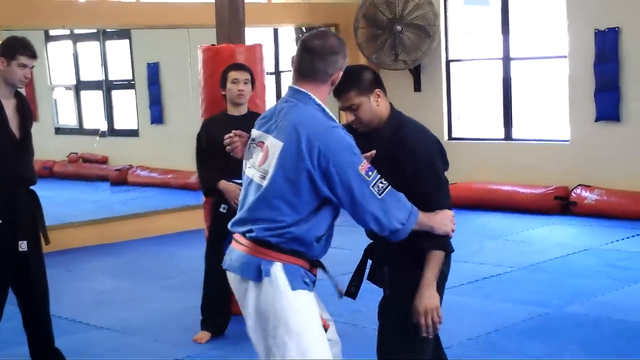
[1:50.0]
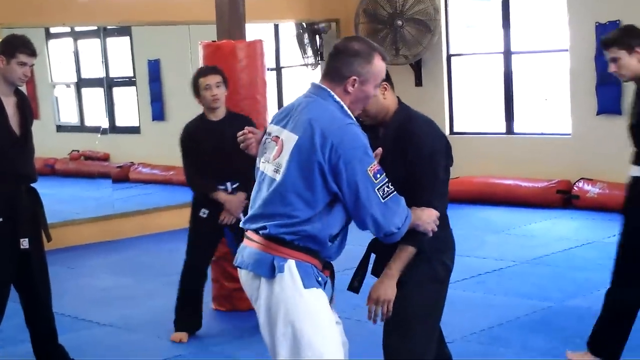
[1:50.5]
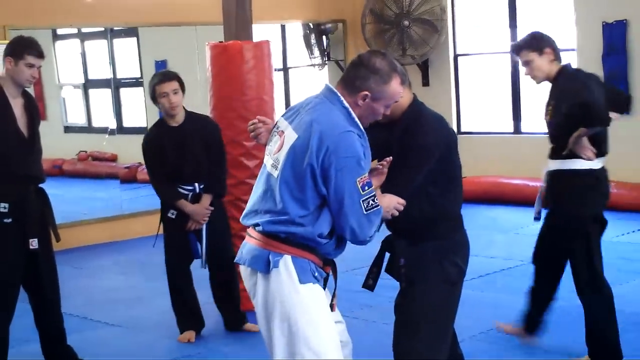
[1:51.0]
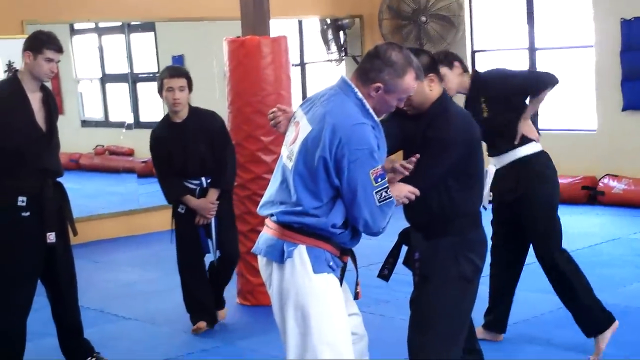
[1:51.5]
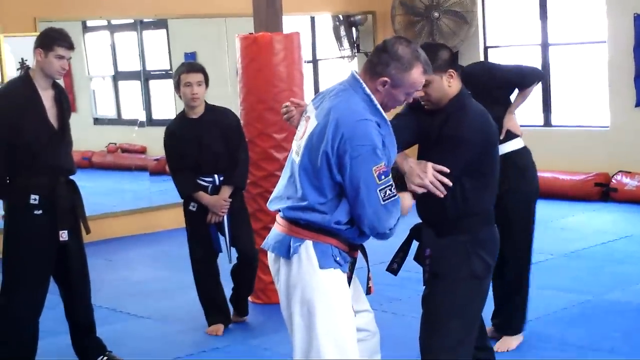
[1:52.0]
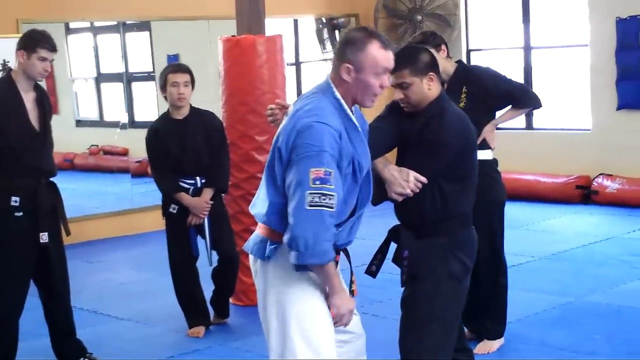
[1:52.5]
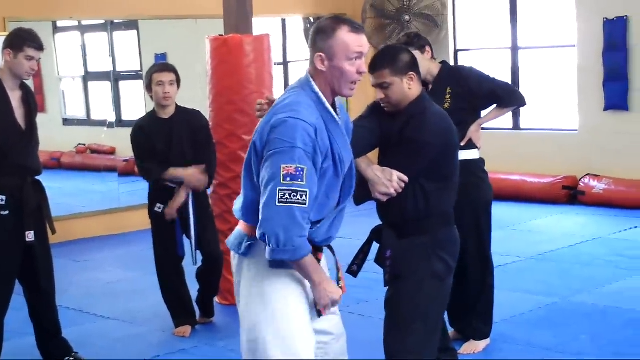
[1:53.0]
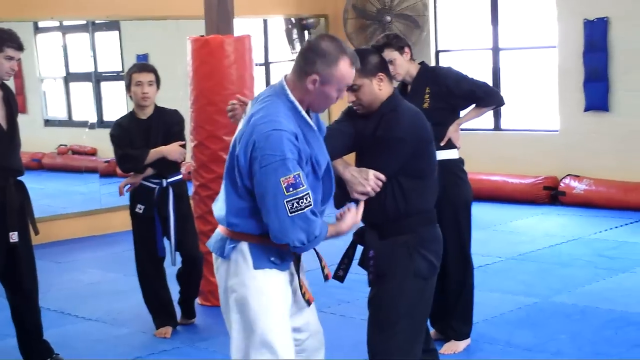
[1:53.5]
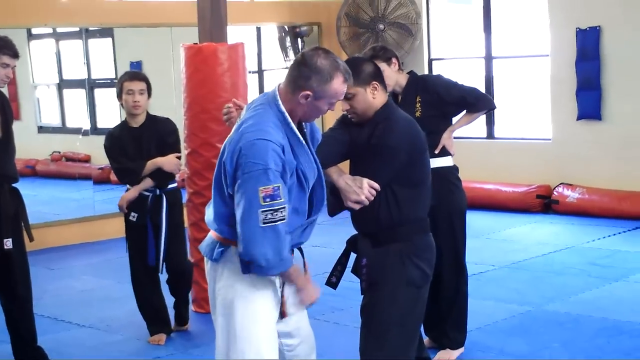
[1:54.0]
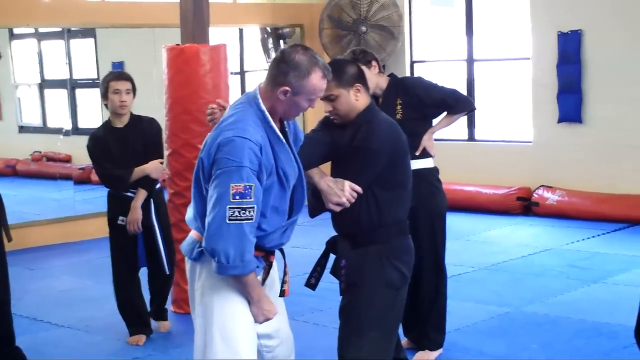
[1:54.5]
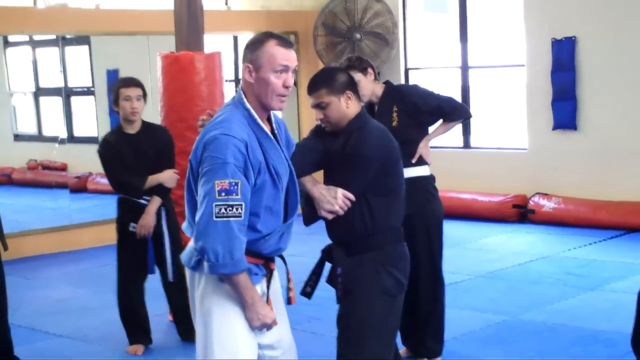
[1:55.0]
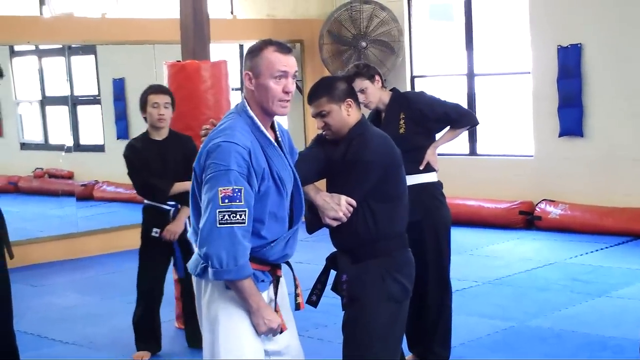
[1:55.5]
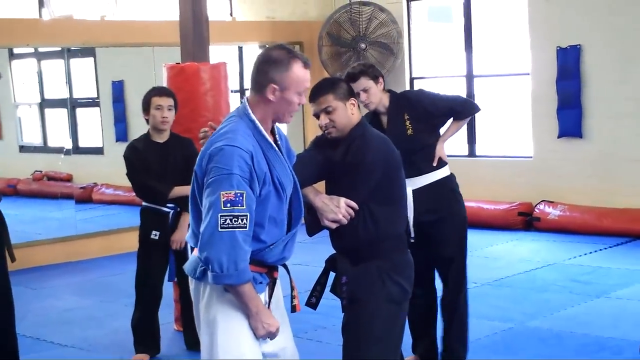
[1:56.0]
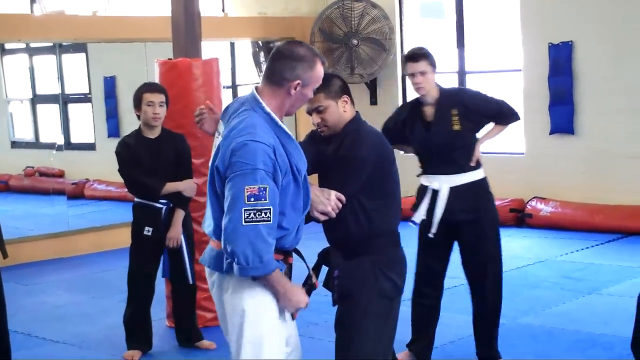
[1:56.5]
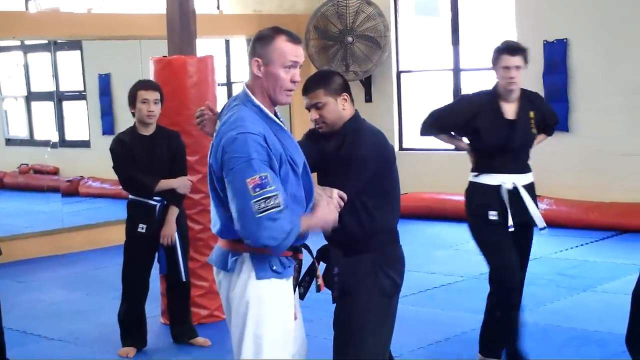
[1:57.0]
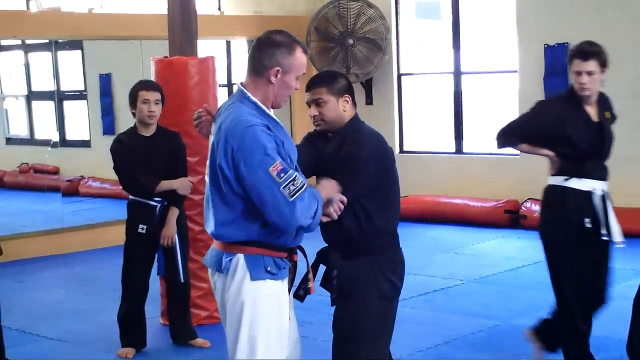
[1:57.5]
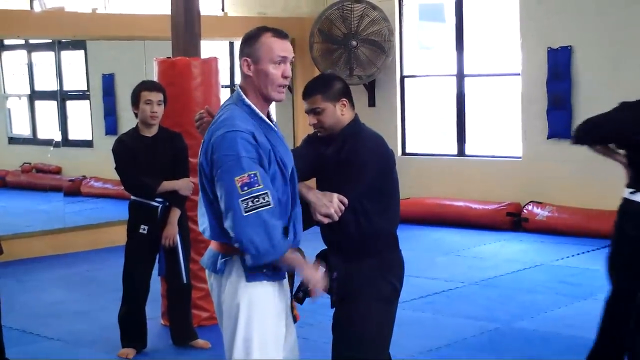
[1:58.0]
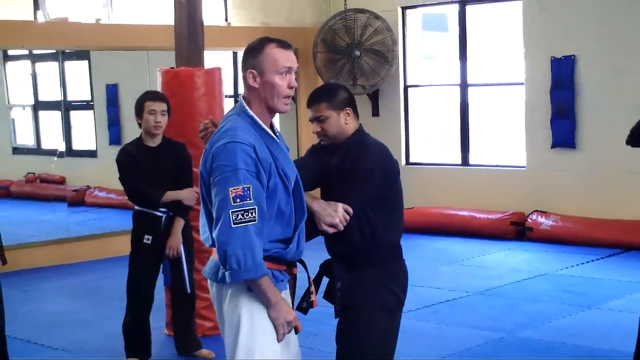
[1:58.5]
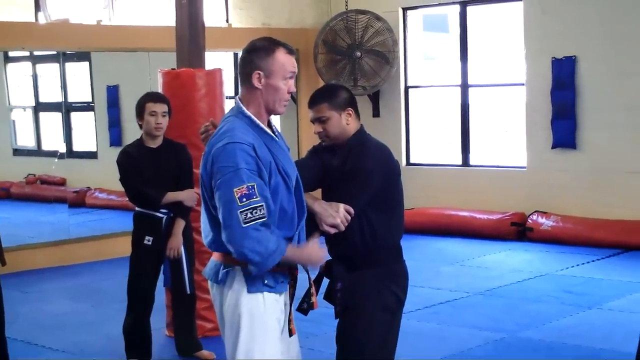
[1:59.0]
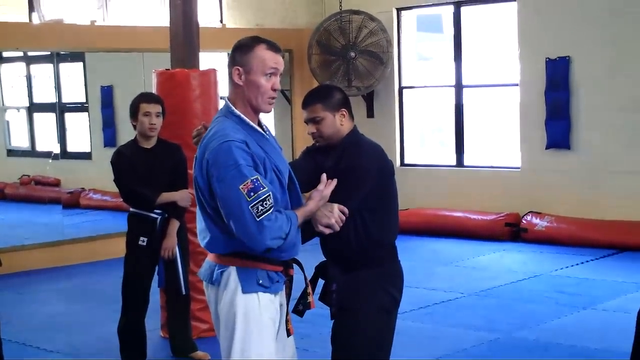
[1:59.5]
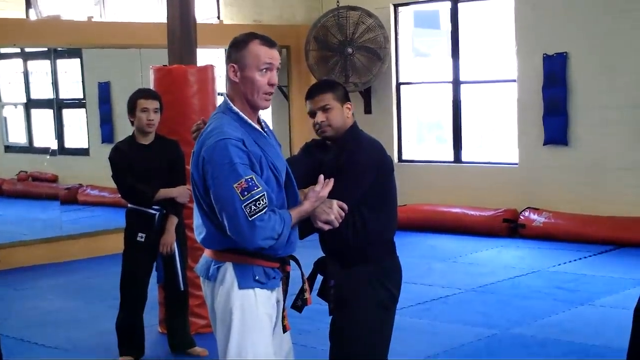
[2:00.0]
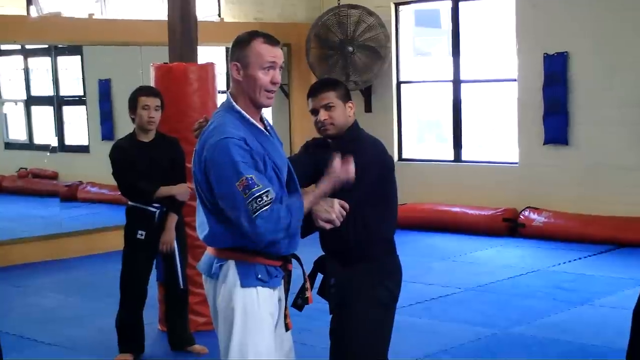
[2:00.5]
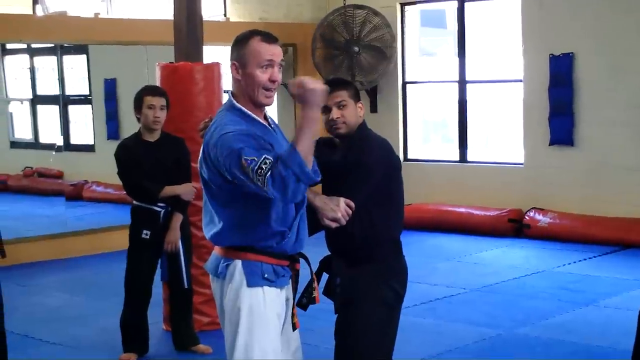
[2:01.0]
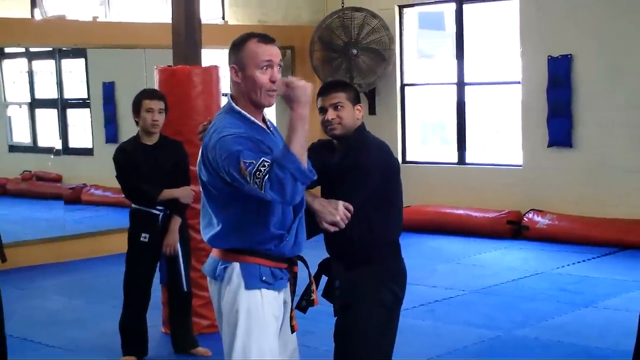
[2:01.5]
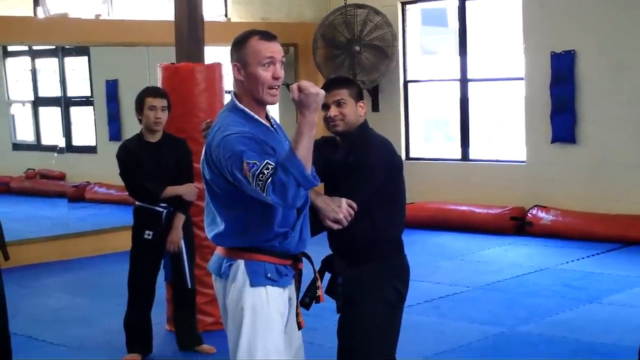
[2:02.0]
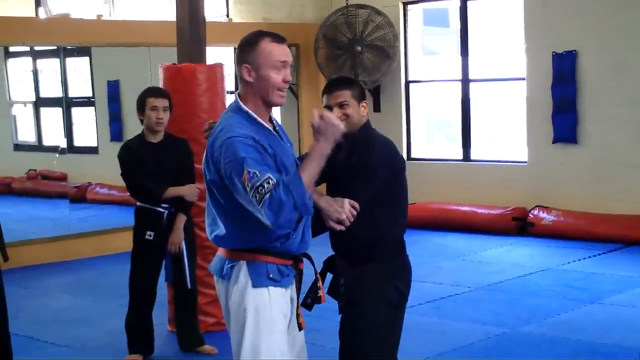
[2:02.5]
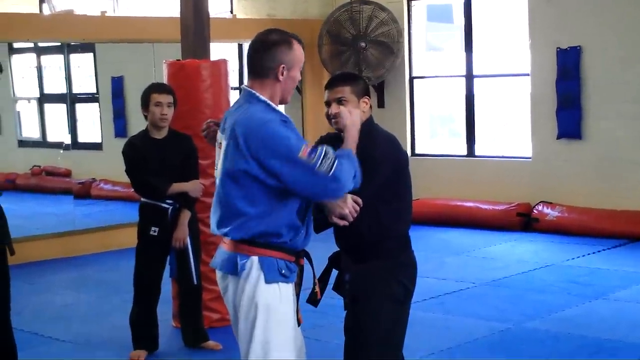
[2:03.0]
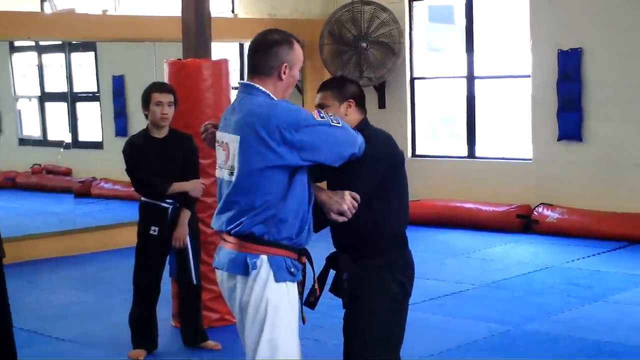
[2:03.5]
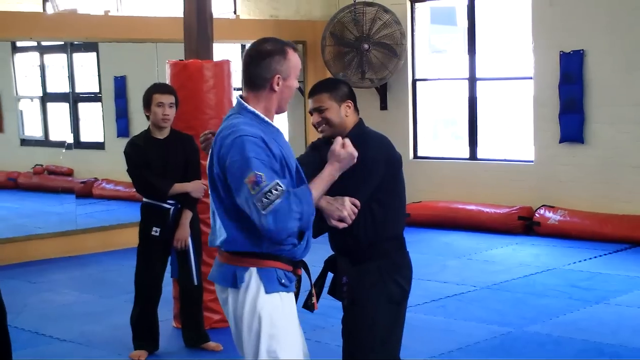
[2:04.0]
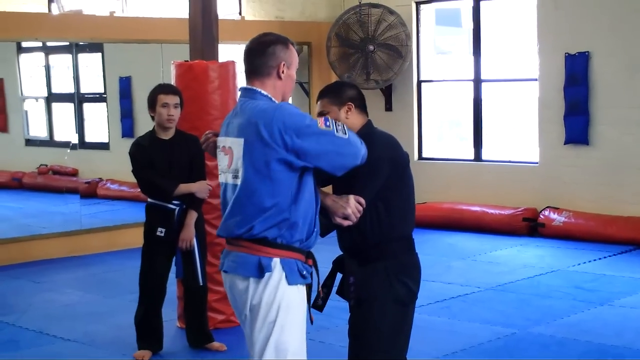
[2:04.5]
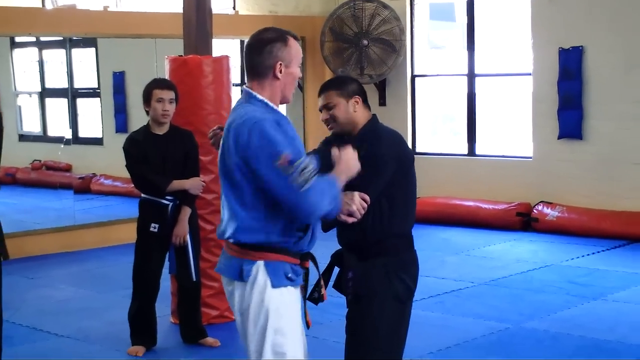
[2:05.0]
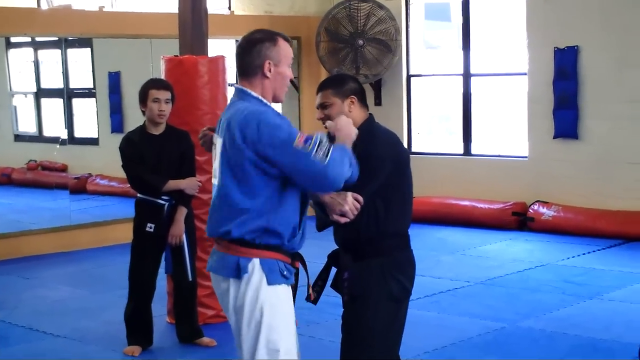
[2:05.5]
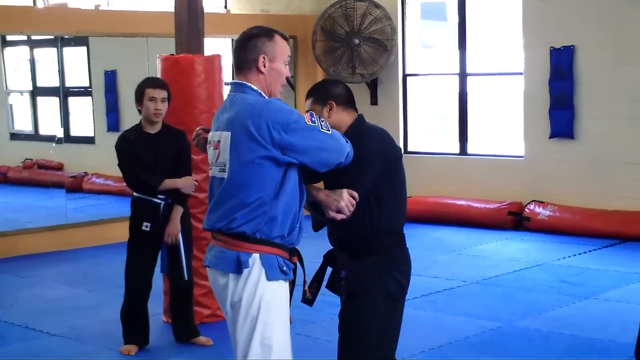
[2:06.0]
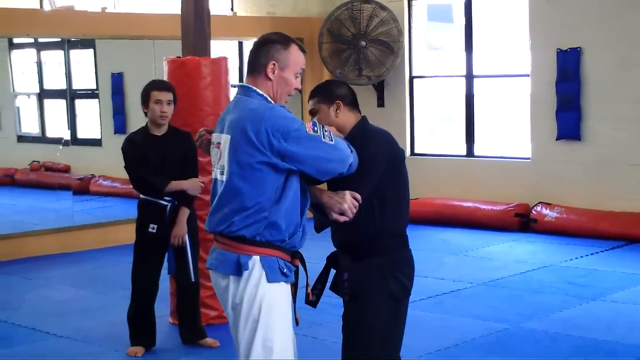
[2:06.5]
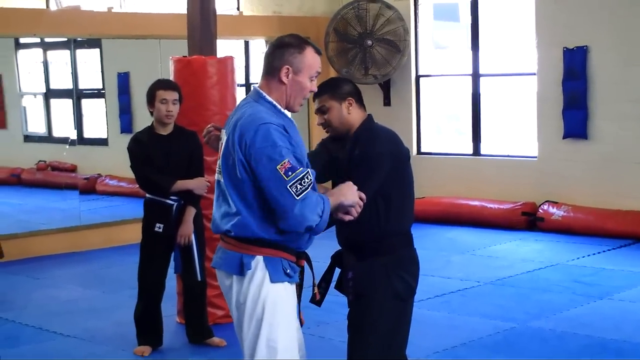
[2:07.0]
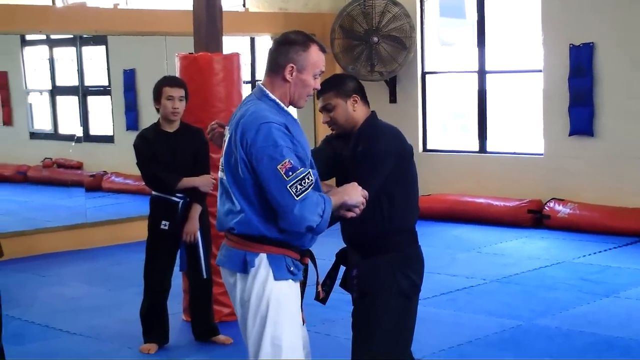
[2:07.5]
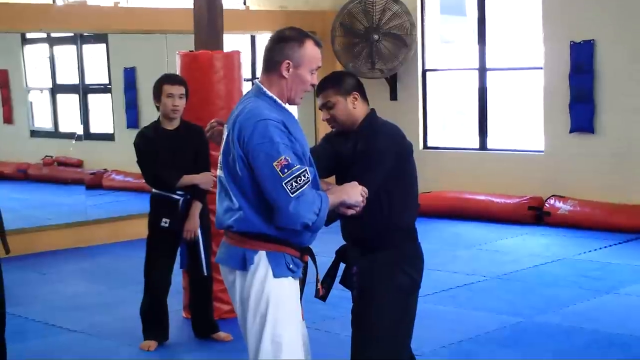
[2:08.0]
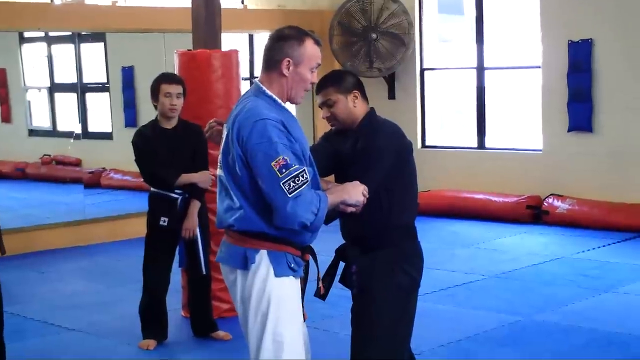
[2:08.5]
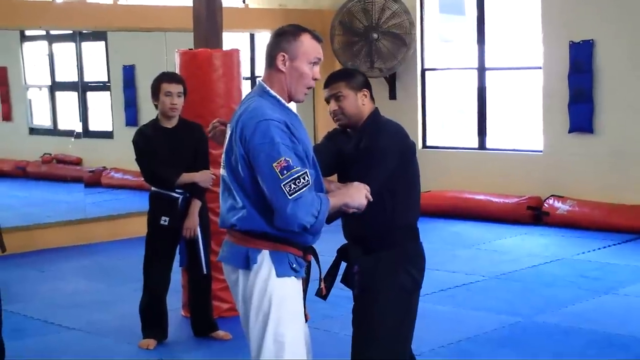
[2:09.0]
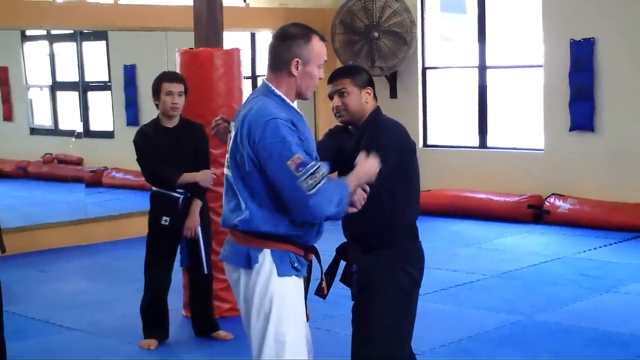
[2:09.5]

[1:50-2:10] An instructor teaches a martial arts class, demonstrating a move on a student. At one point he takes his fist and shows how to punch the student in the face; the student kind of laughs about it. Other students change their position around the room to better see the demonstration. The padded floor underneath them is blue. The instructor wears a blue top, white pants, and several belts around his waist, including red and black. The students wear black outfits with belts of different colors according to their ability. A very large window lets a lot of light into the gym, a large fan is in the corner, and red padding surrounds the column in the middle of the room and runs along the side underneath the window. One wall is mirrored, reflecting everything in the room.